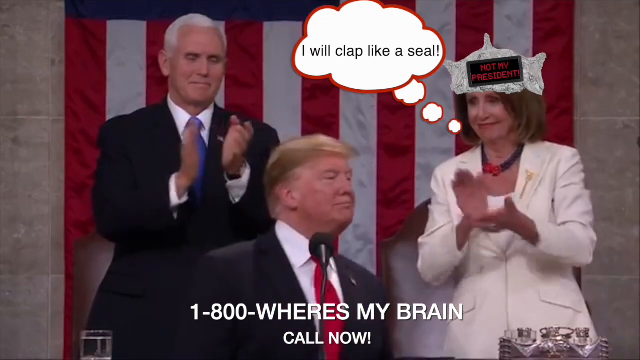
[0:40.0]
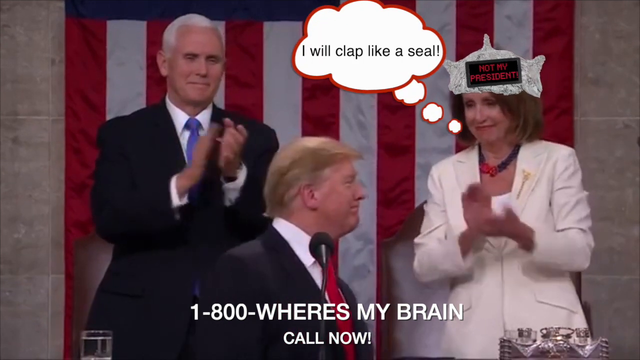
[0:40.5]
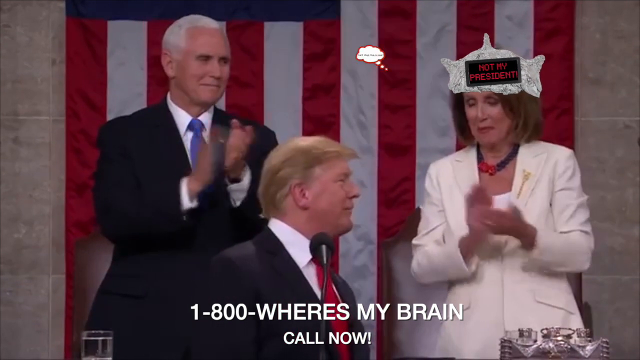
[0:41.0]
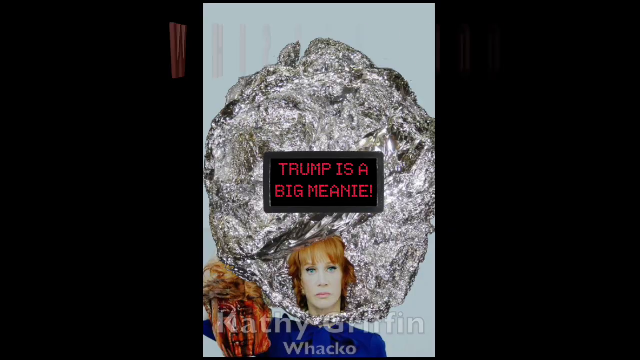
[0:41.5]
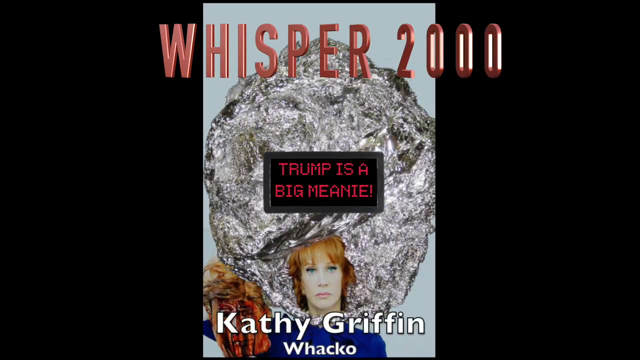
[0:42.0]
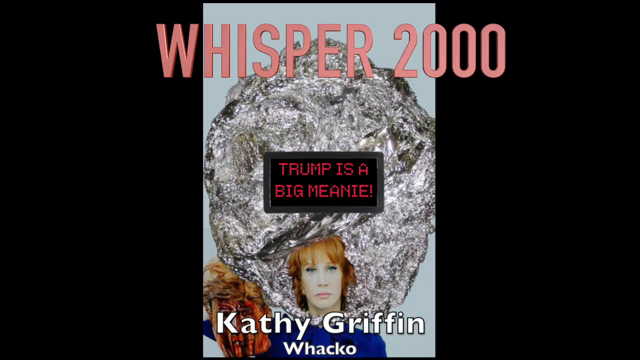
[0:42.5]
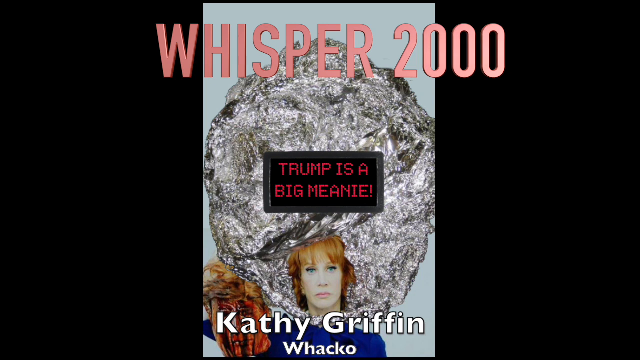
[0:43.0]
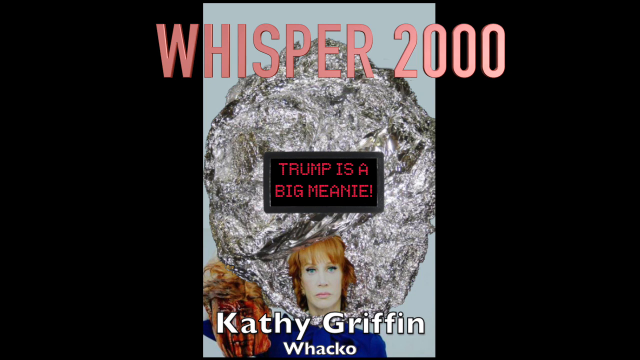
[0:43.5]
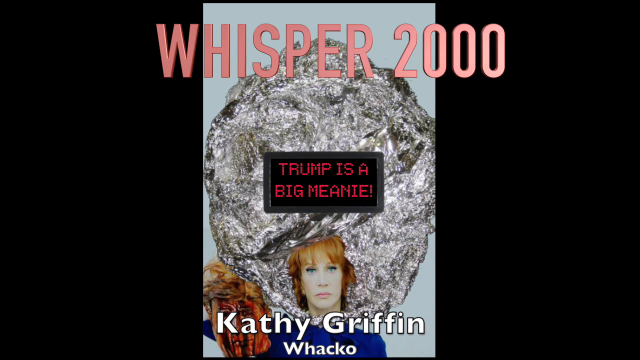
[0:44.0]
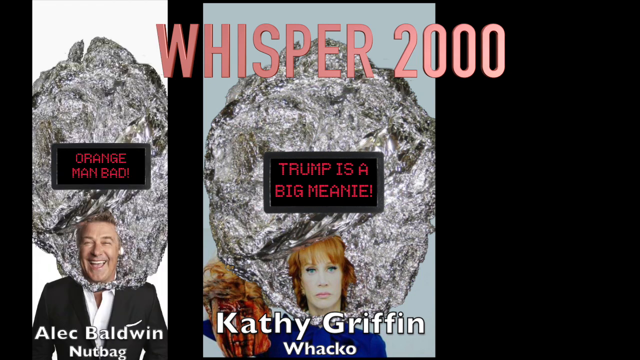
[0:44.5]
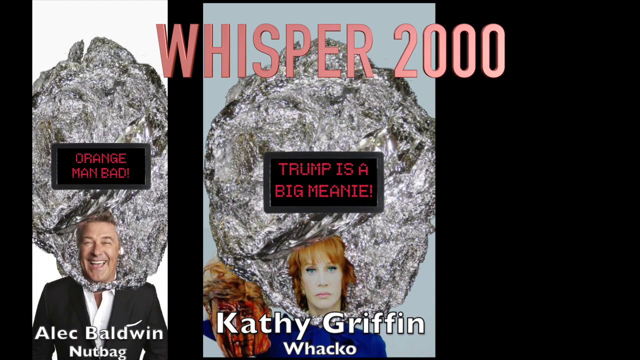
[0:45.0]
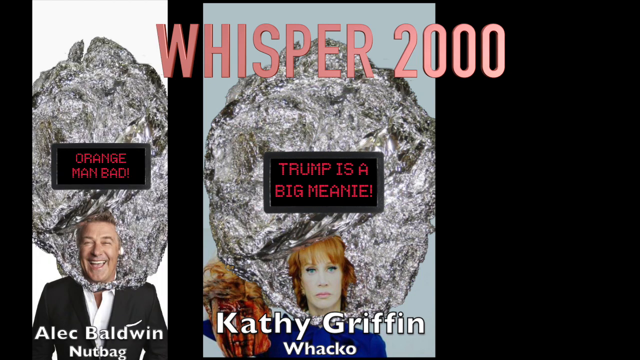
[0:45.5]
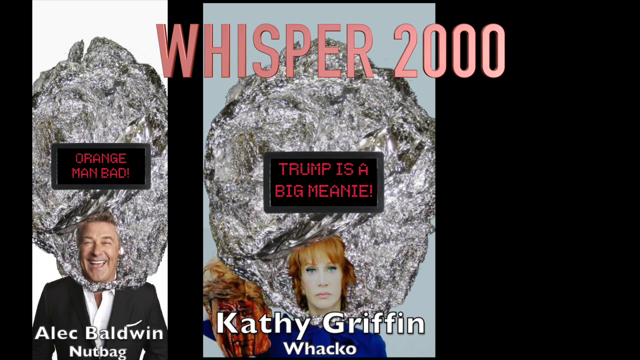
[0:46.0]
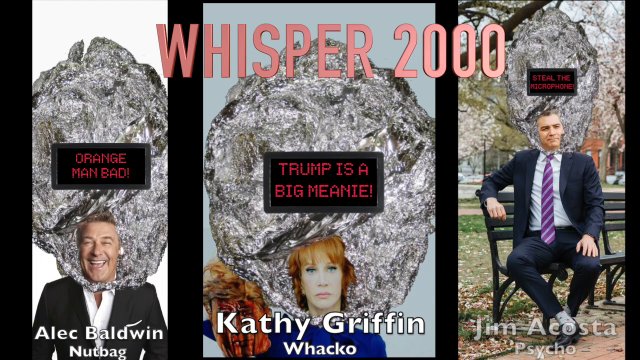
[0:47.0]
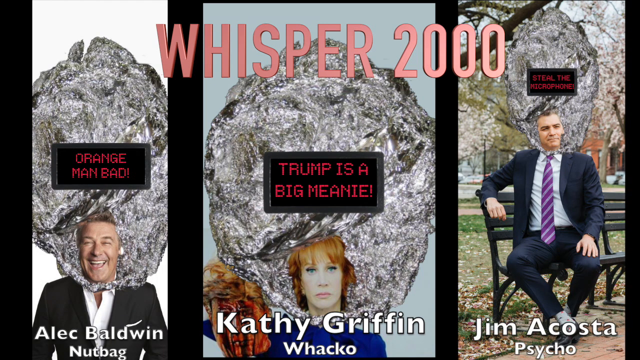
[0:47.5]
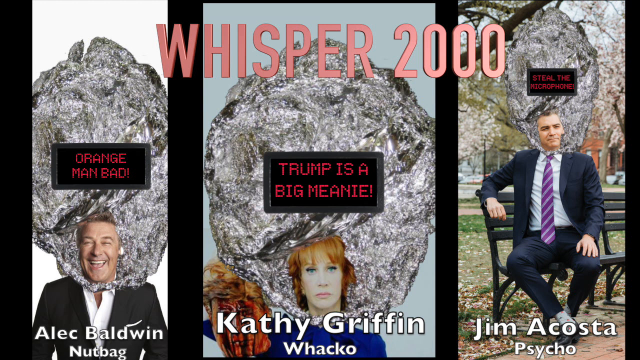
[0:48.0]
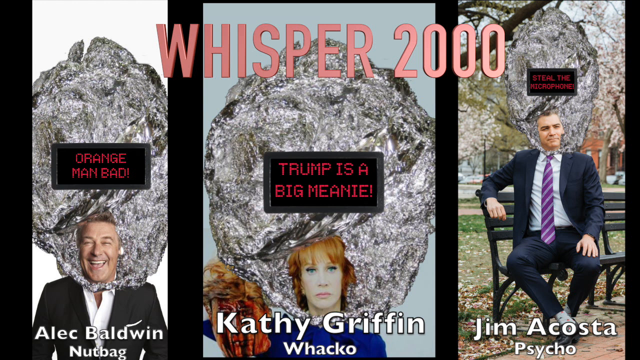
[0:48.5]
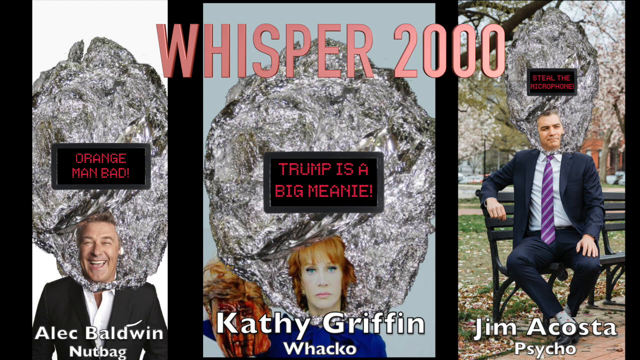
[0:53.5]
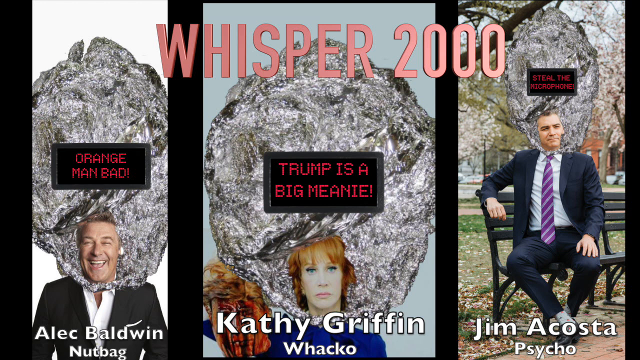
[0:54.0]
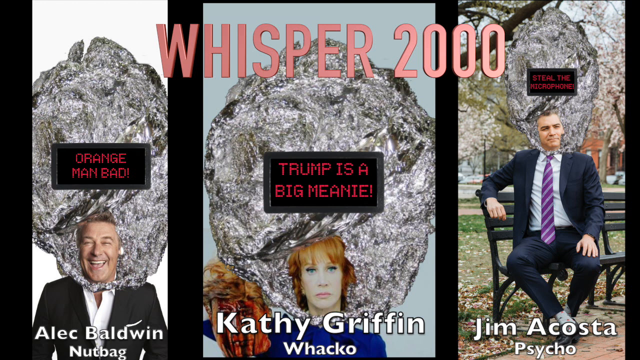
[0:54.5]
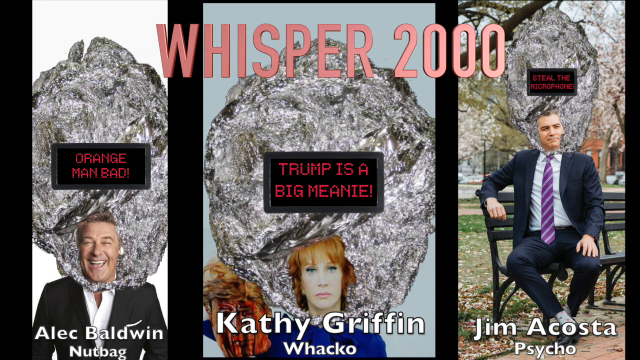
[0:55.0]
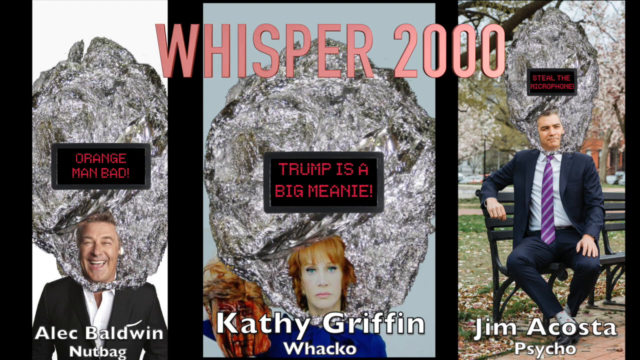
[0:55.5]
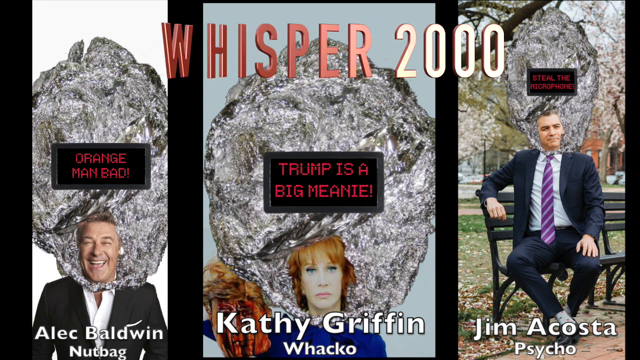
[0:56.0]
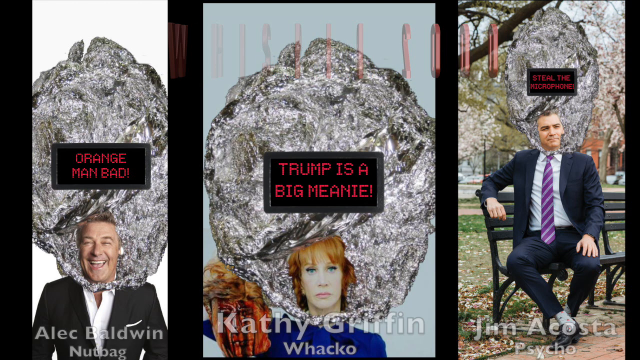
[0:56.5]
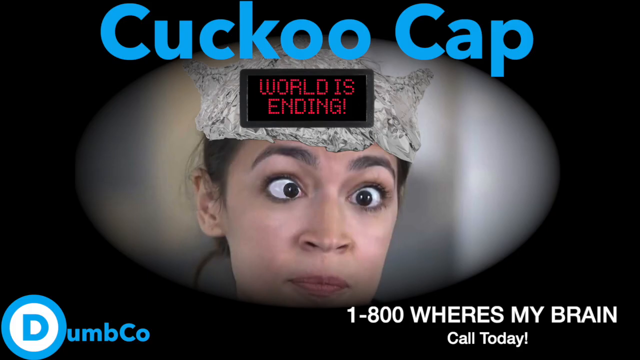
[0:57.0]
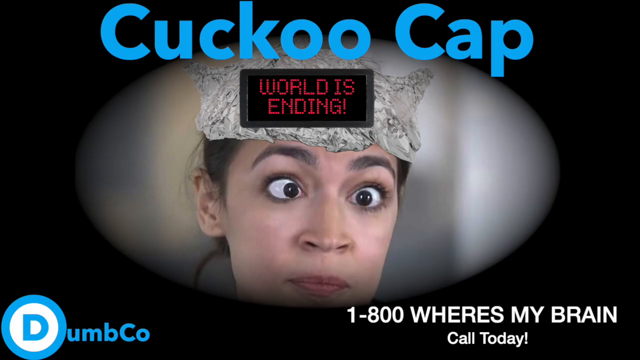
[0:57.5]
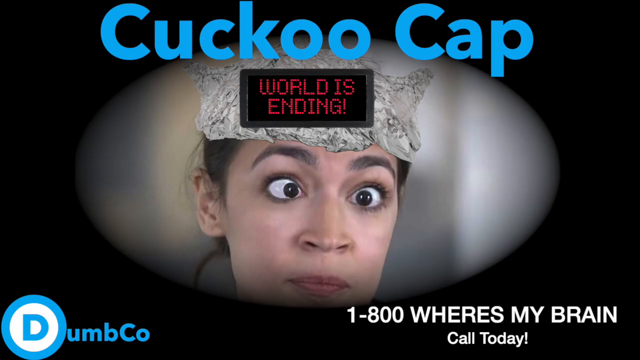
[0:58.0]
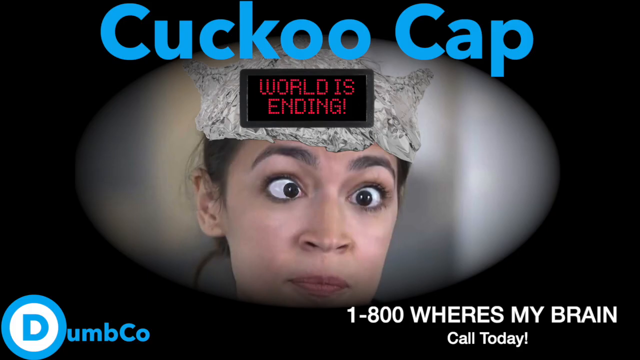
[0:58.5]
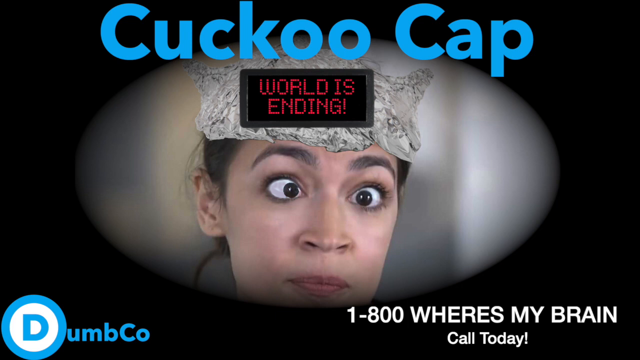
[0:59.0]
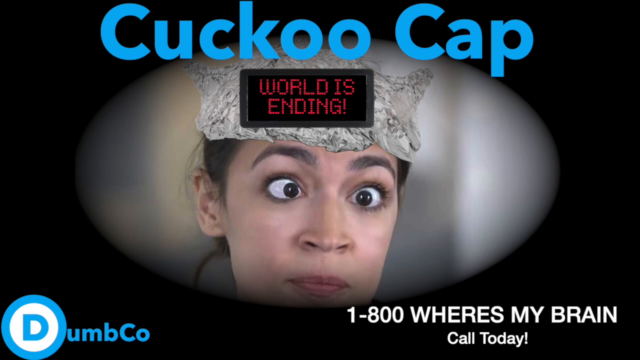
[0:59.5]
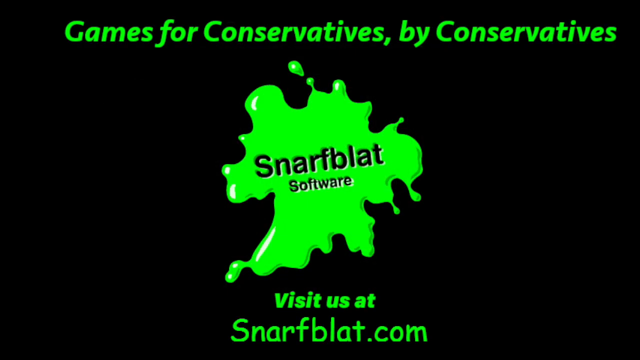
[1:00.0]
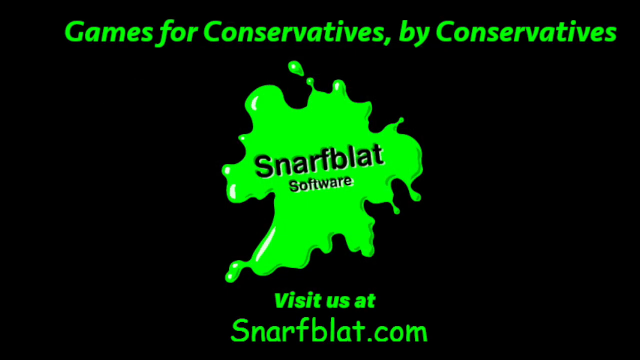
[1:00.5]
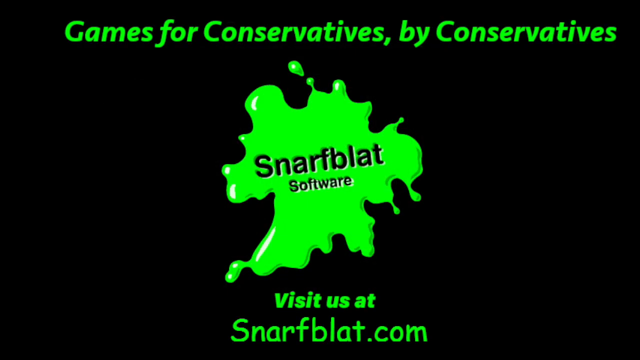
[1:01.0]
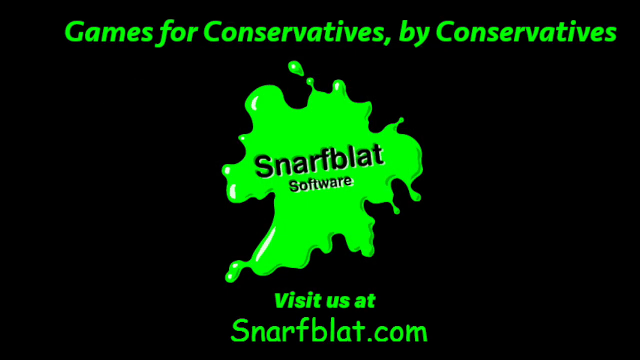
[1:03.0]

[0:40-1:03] Nancy Pelosi, wearing a white suit, is clapping, and a bubble has been added reading "I clap like a seal". She has a tinfoil hat and a sign on her, and Mike Pence is also clapping. The scene changes: "Whisper 2000" appears in light pink words at the top of the screen, with a wad of tin foil and a sign beginning "Trump is a". Kathy Griffin's picture is superimposed small at the bottom of the tin foil, with her name under it. Another man appears to the right with a gigantic tin foil hat, and another man on the left sits on a park bench in a suit and purple tie with a gigantic wad of tin foil on his lap. The video switches, and the man on the left is labeled "Alec Baldwin" and the man on the right "Jim Acosta". The video goes back to the "cuckoo cap" words at the top and "world is ending", with a strange look on a brown-haired woman's face and the "1-800" where's my brain number. It ends with a black screen reading "games for conservatives, by conservatives" in bright neon green letters, then "snarfblat software" on a green splatter, with the website "snarfblat.com" shown on top.